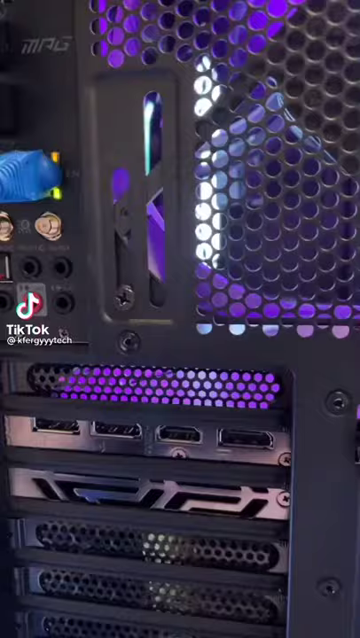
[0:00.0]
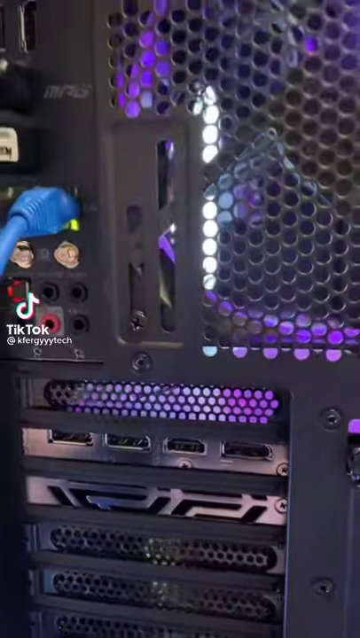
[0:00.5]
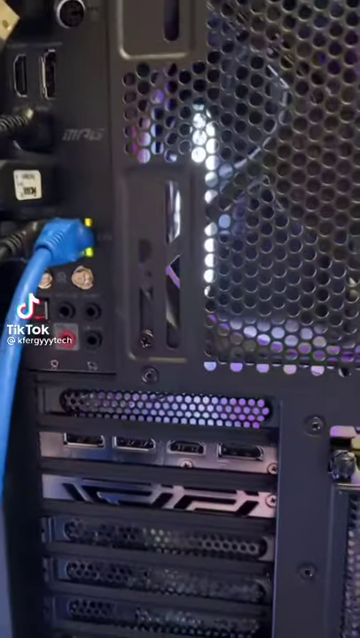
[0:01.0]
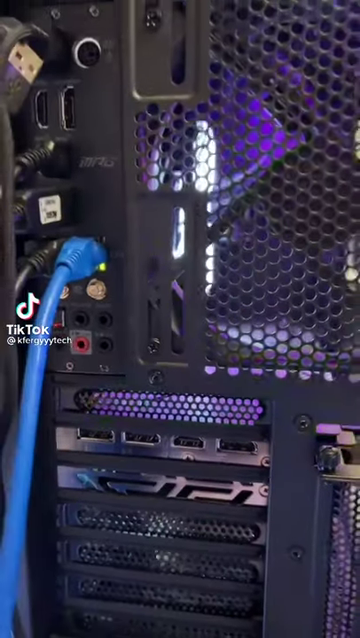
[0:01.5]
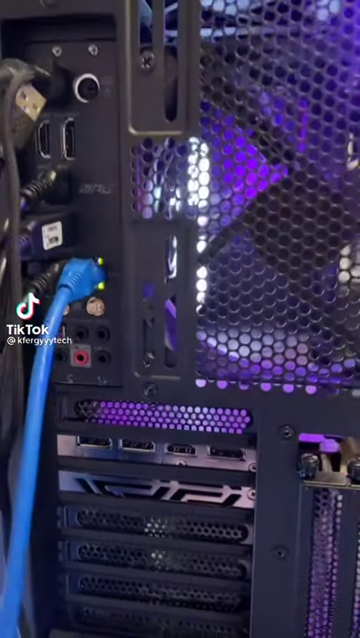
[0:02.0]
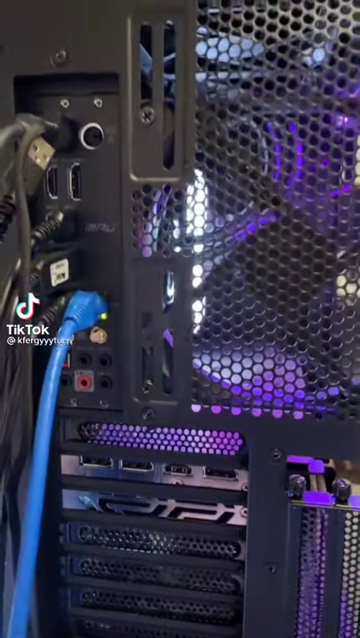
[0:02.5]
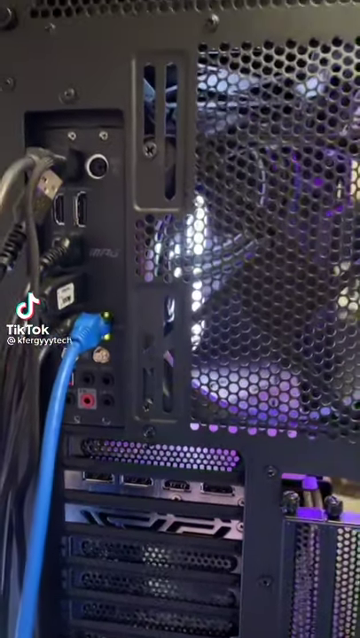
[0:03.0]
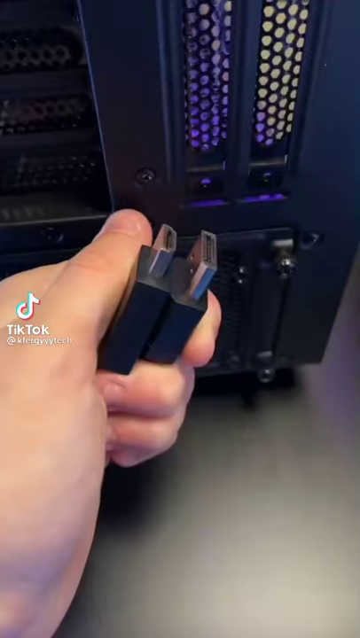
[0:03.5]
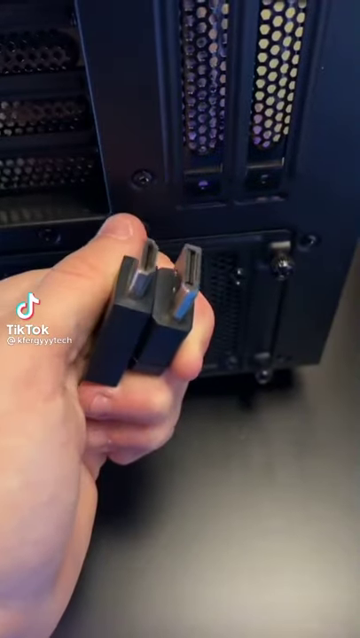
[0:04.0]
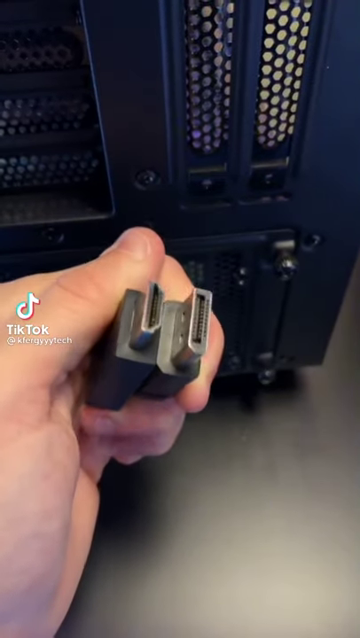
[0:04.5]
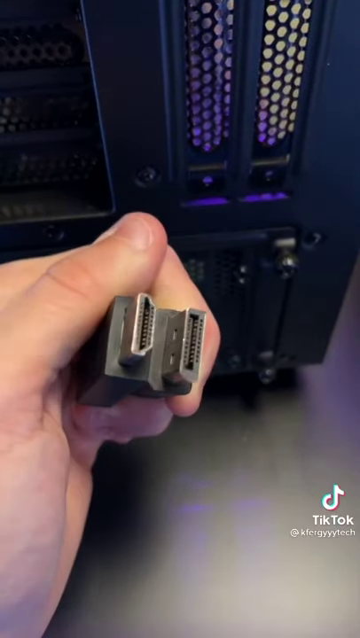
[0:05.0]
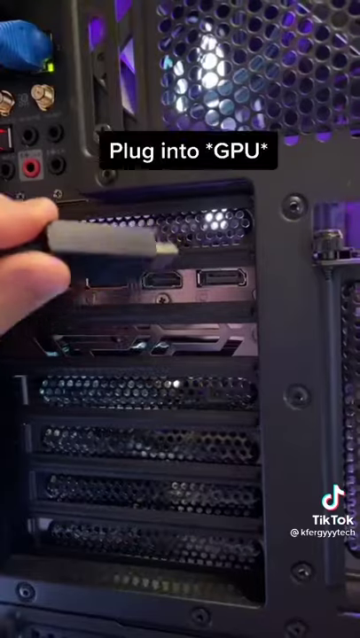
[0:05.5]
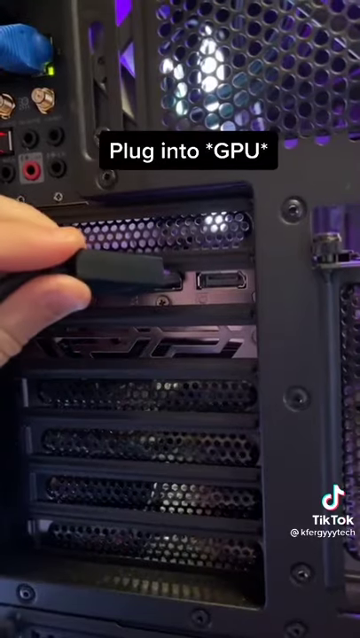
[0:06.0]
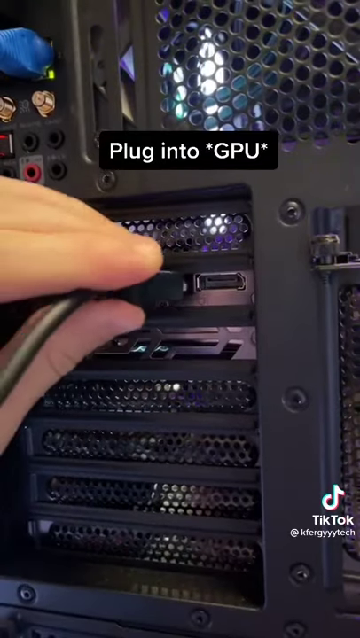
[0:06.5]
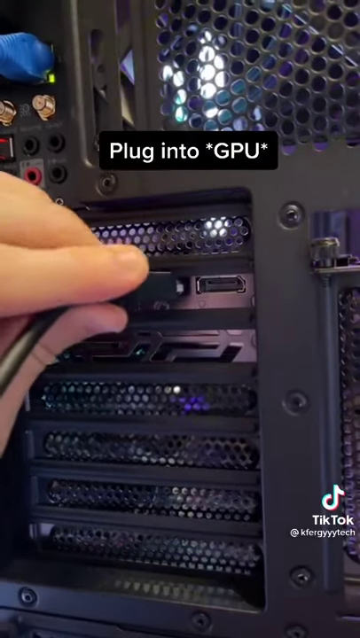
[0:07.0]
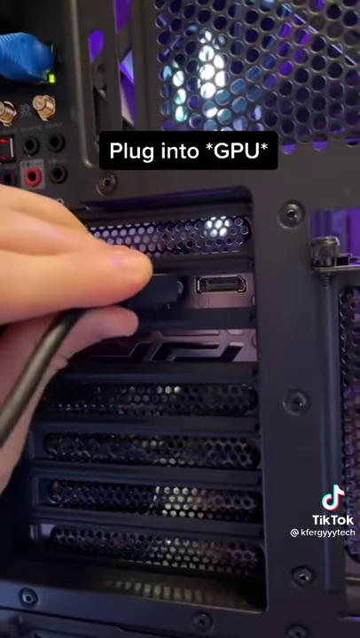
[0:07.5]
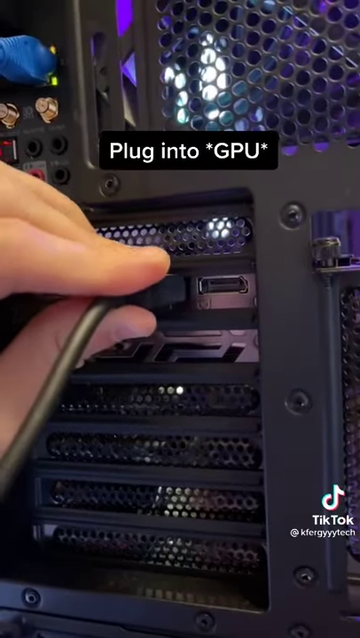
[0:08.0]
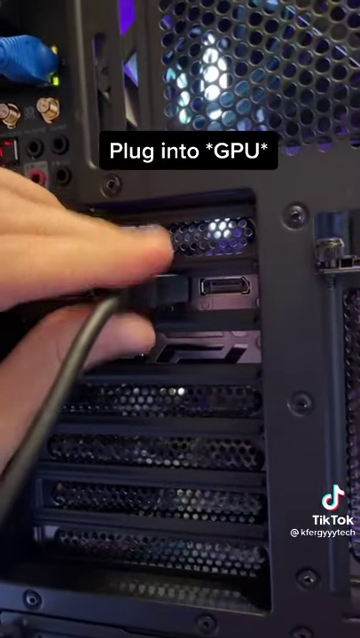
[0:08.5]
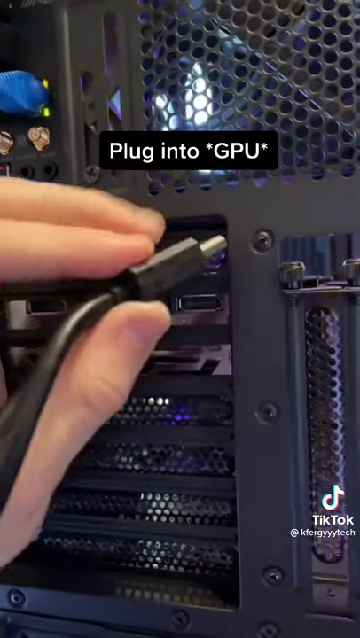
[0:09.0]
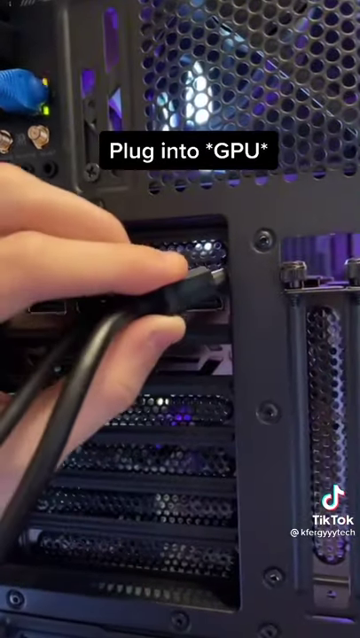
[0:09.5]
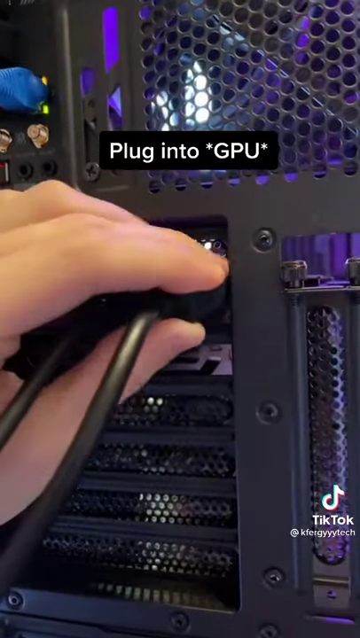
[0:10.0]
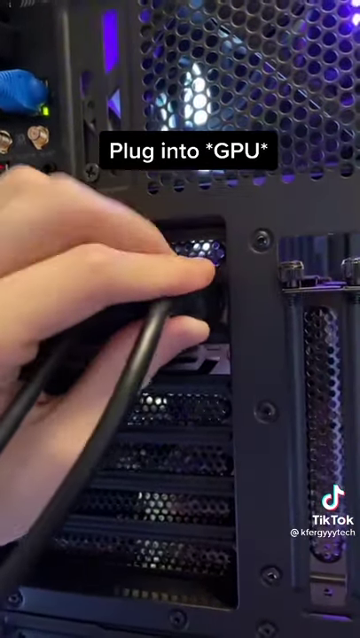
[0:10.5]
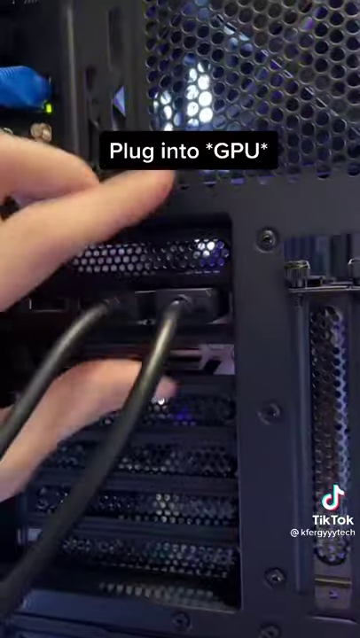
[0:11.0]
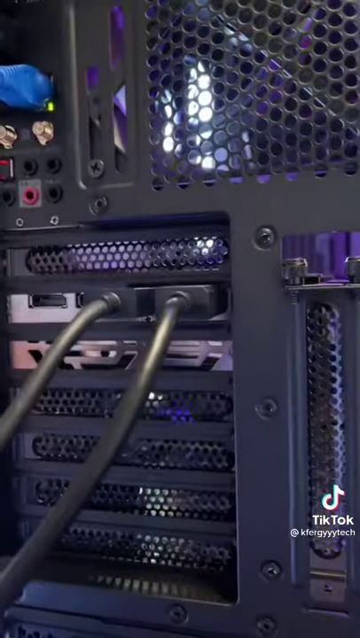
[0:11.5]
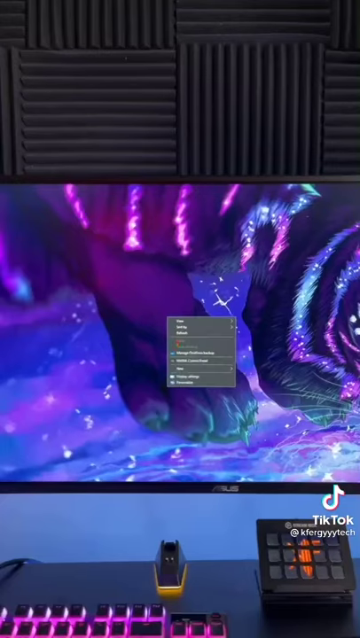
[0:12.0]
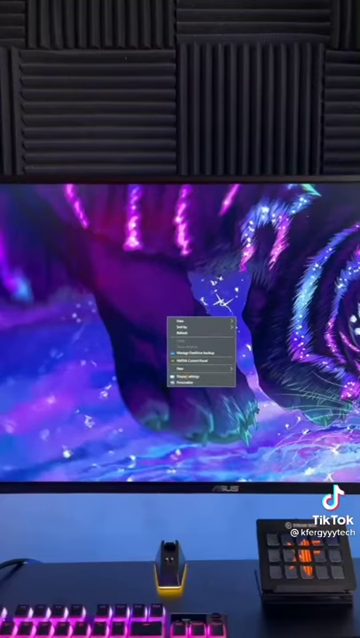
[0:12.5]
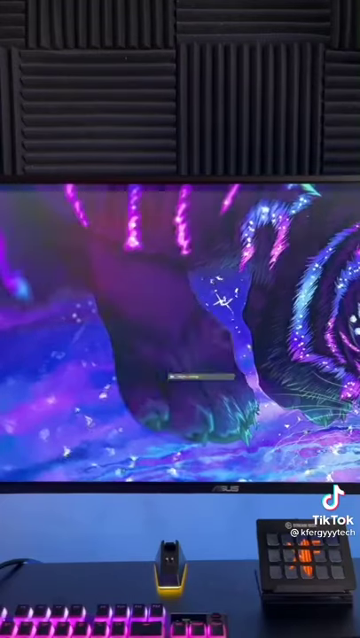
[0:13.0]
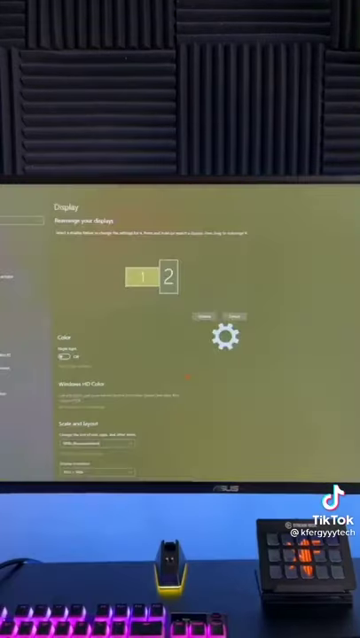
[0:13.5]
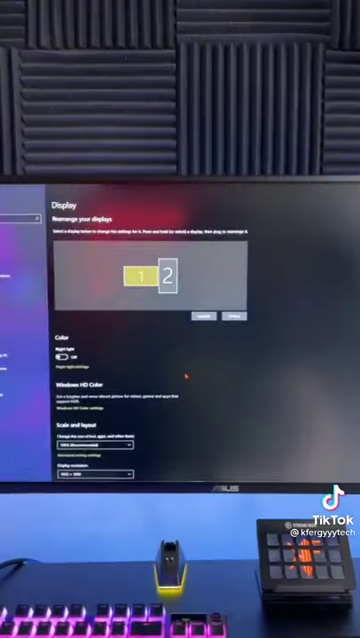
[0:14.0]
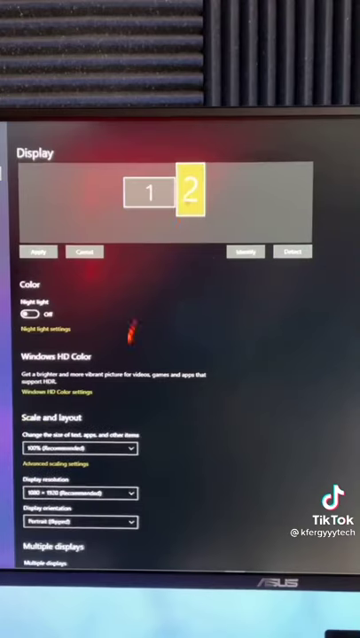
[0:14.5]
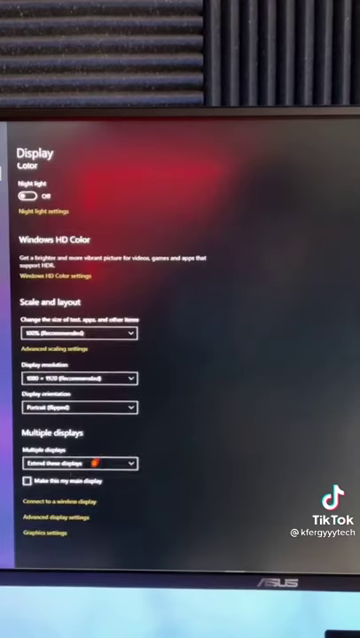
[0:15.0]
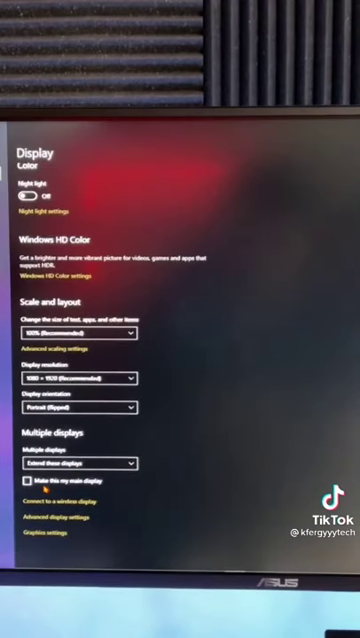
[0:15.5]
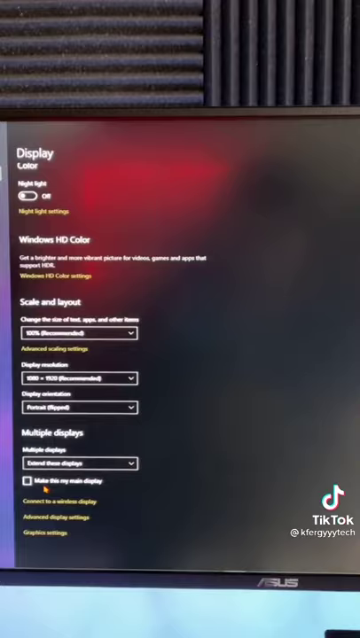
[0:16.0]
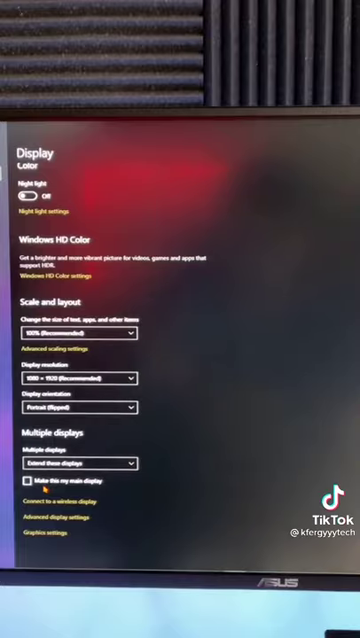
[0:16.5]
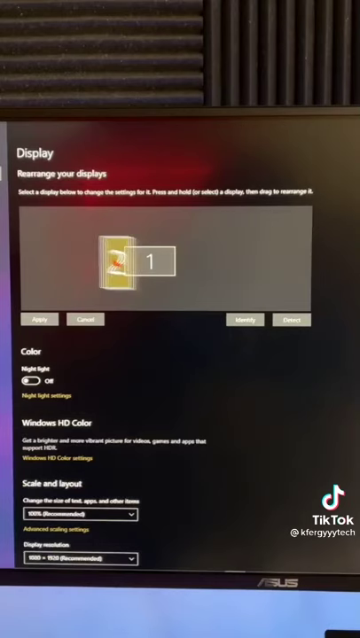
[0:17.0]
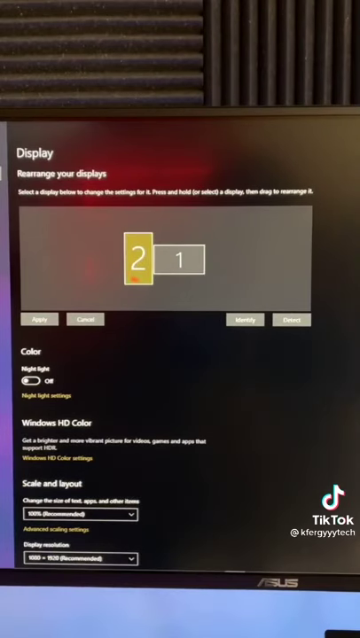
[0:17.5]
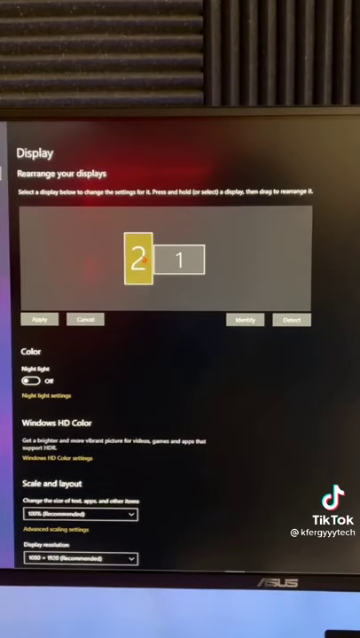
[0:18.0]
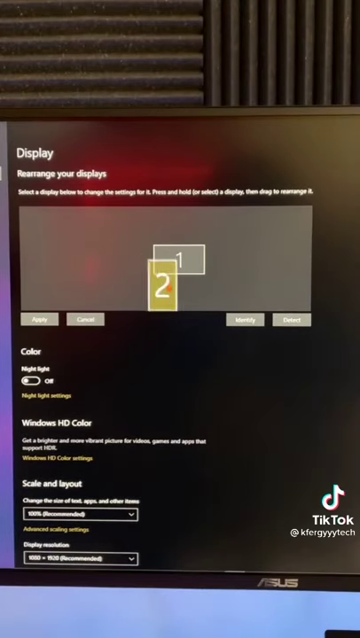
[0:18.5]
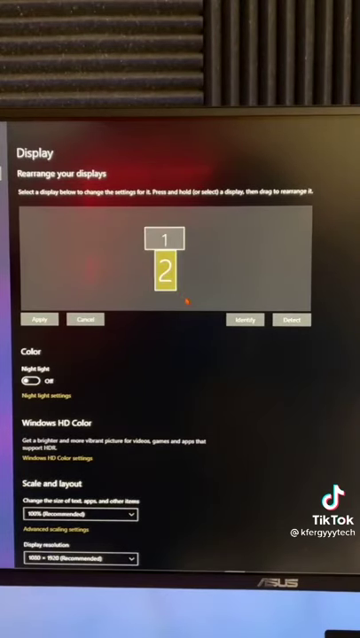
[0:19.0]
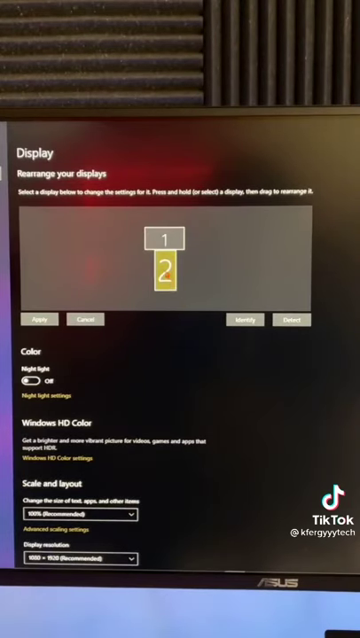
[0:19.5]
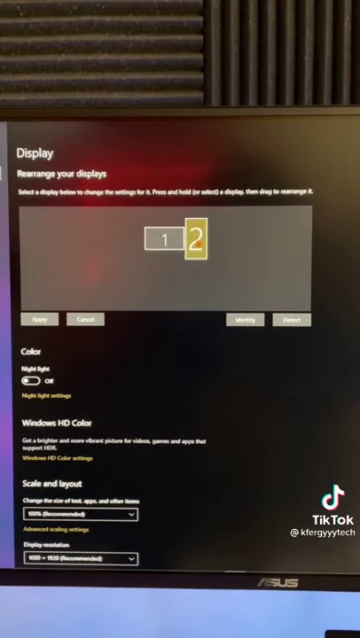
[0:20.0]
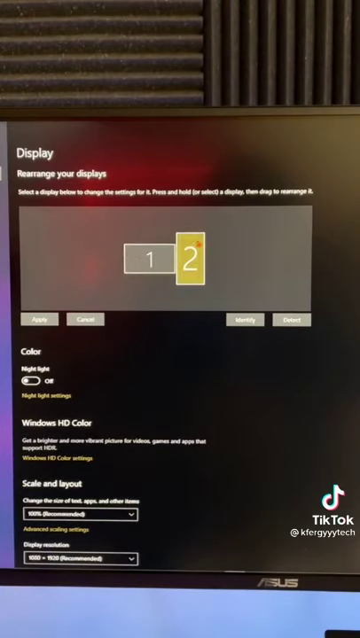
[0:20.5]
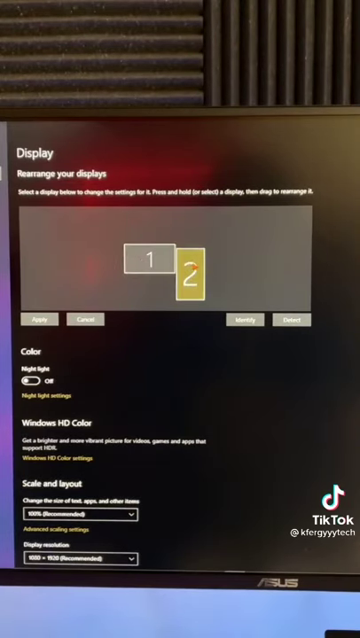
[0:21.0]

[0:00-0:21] The video appears to be about setting up dual monitors on a PC. At the beginning, someone grabs two HDMI cables and plugs them into the back of what appears to be a PCI slot GPU. The video then transitions to the monitor, where they go to the settings for the display tab and customize the monitor view, adjusting which monitor is the primary and which is the secondary. One monitor is vertical and one is horizontal, probably a streaming setup of sorts, perhaps for text reading or coding. The computer has a lot of RGB coloring on its back, suggesting a streamer or some type of gamer. The video shows switching between the two monitors to get them set up and plugged in through the GPU.